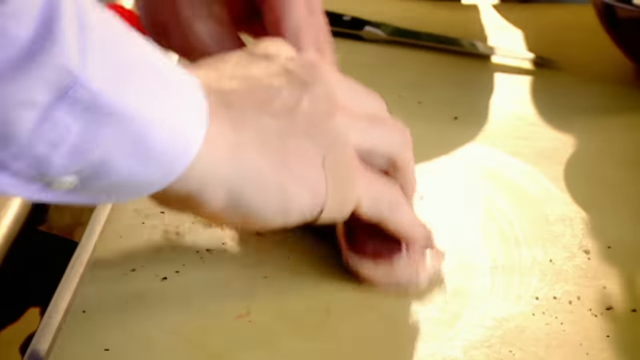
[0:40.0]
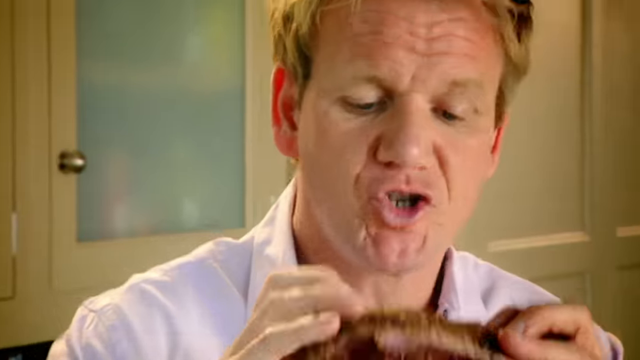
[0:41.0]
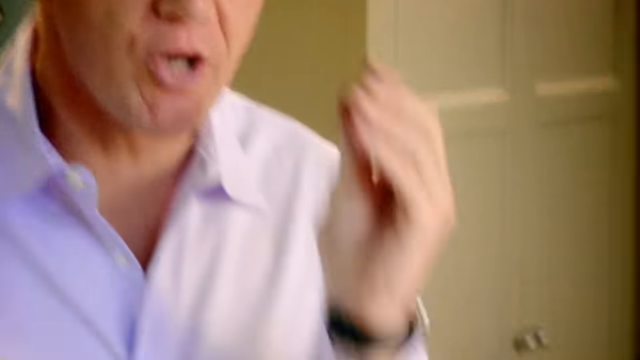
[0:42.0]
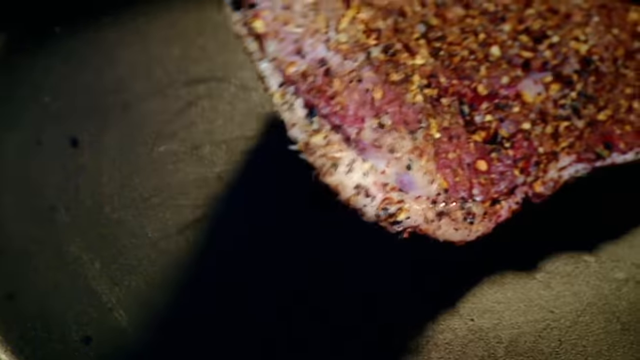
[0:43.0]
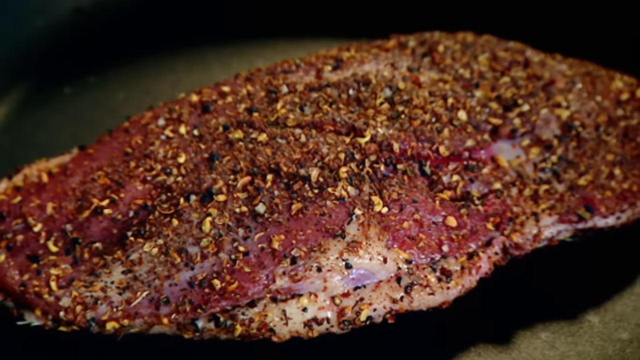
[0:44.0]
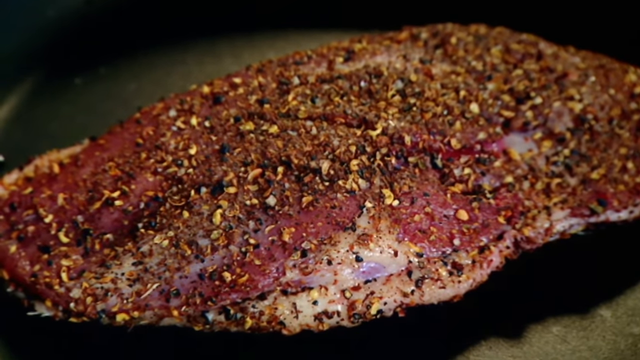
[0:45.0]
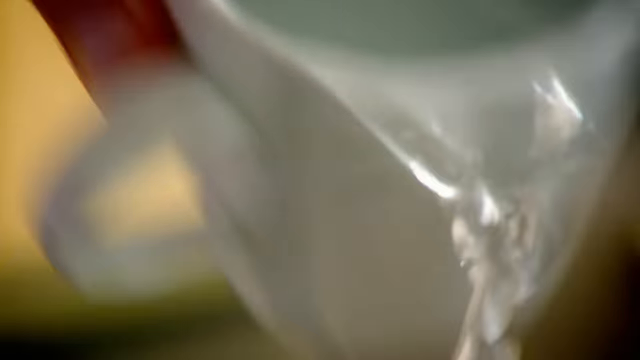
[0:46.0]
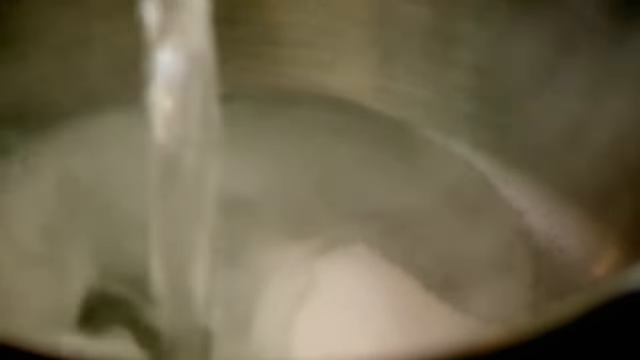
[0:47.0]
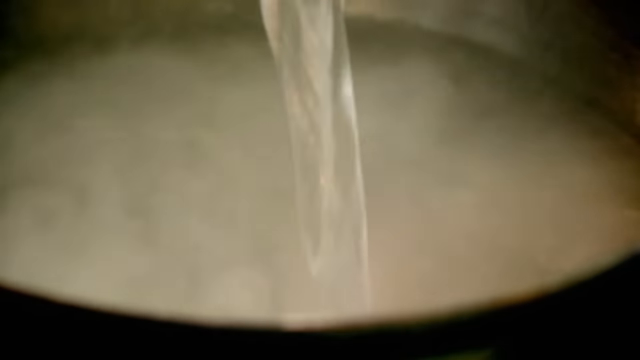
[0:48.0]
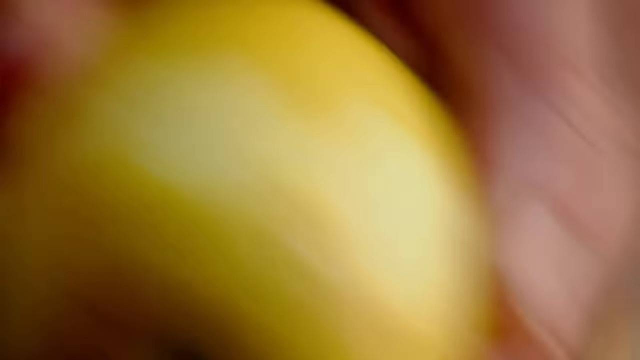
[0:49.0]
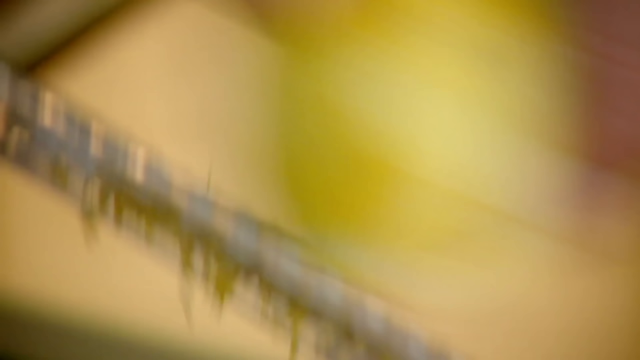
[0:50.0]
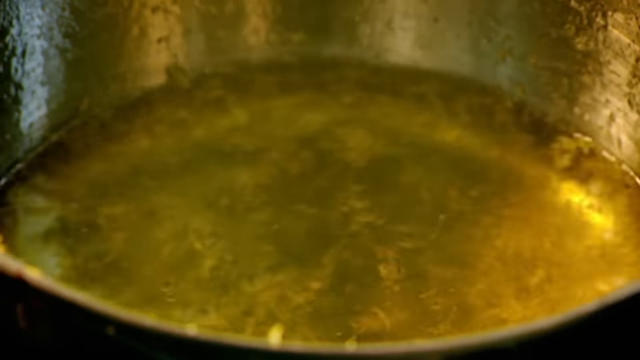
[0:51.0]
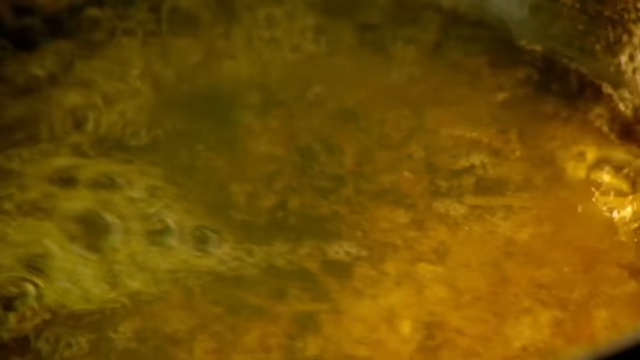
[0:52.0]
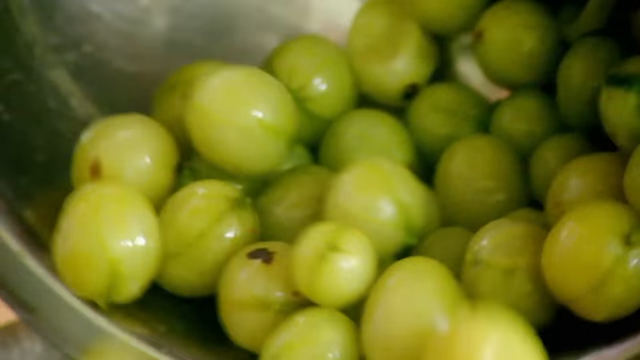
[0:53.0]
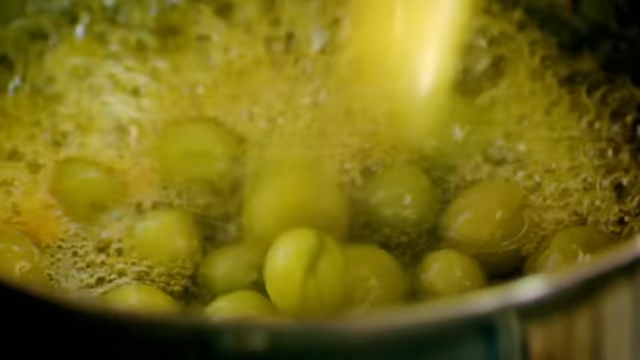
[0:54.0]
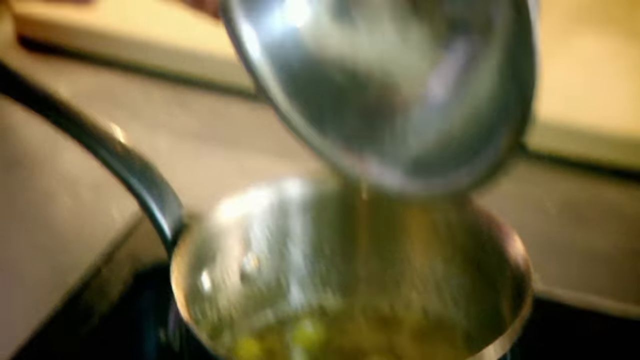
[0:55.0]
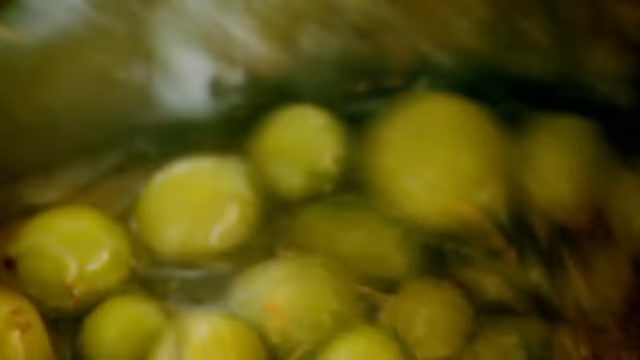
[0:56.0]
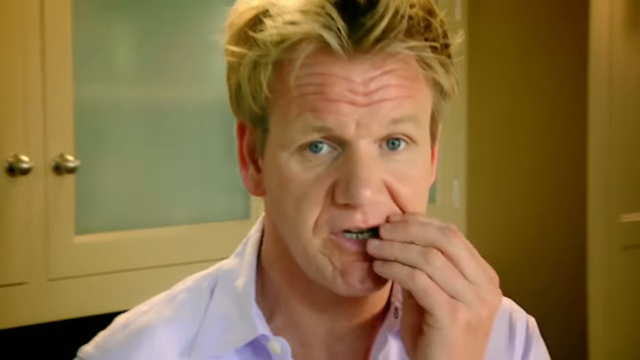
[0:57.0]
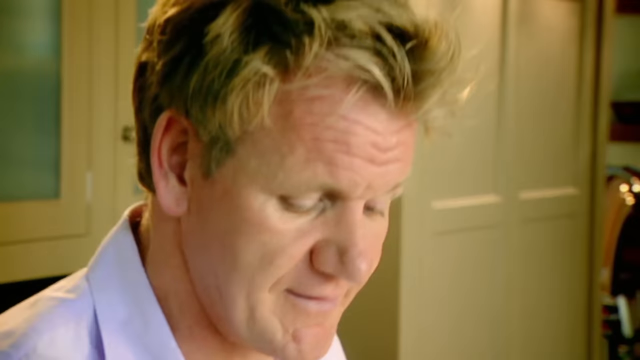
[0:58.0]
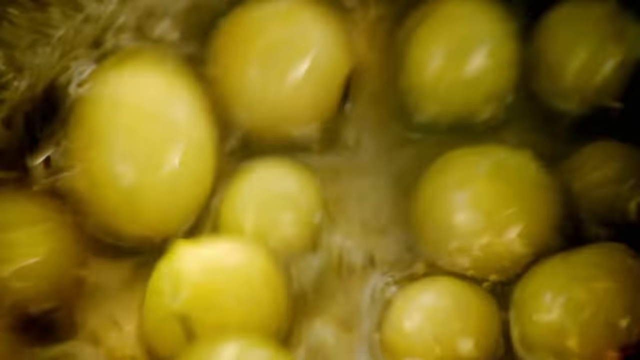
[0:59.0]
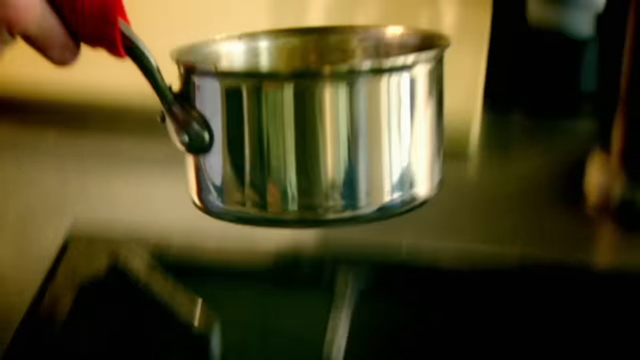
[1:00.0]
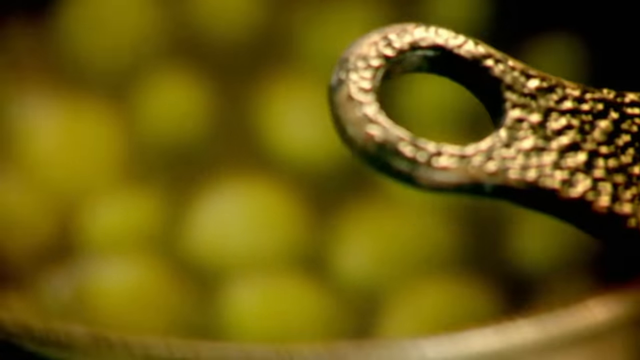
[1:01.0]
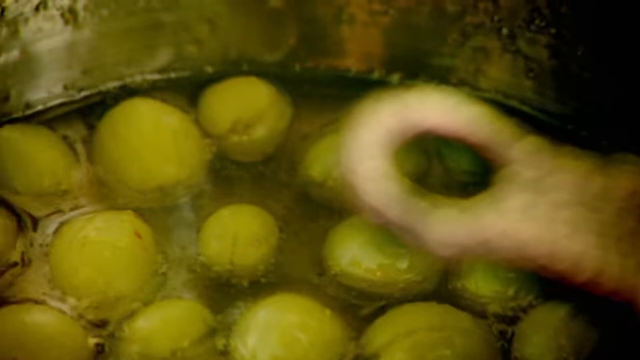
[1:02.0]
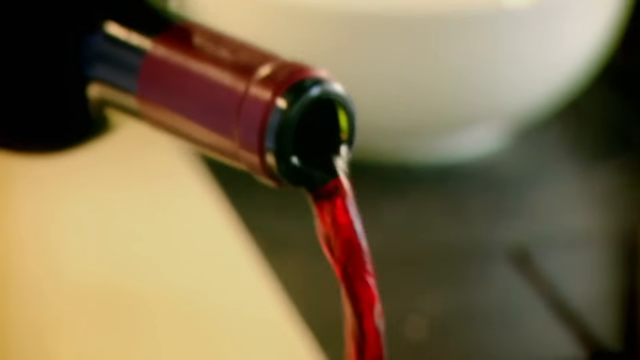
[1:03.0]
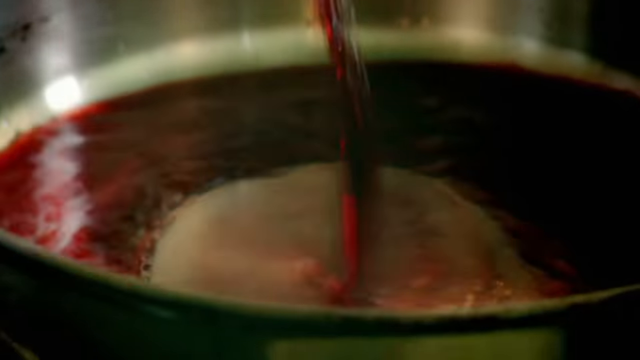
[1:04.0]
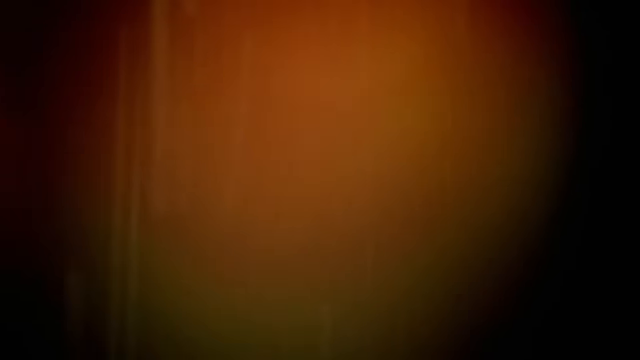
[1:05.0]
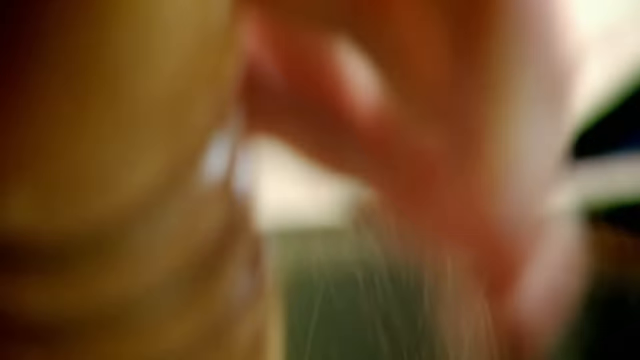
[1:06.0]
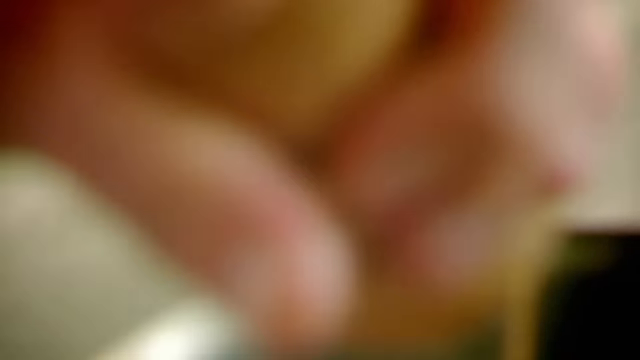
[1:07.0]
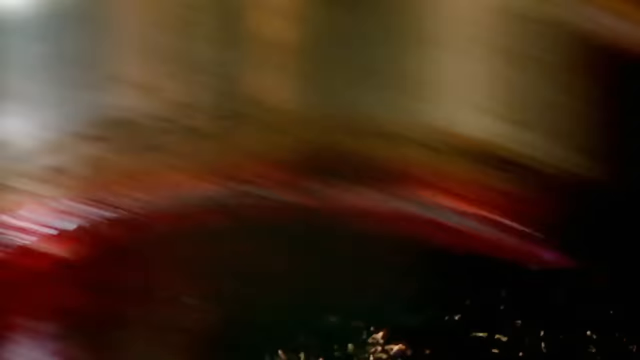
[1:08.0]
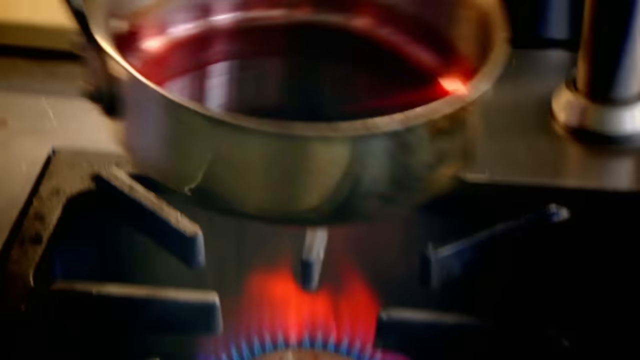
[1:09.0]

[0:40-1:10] The man wipes the table he is working on with the steak he has just seasoned. He takes the steak in both hands and brings it close to his face while talking, looking like he is admiring his work. He places the steak in an empty pan. On the side is a little pot containing what looks like white sugar; he pours water into it and grates lemon zest into the mixture. When the mixture starts boiling, he pours in a cup of golden green grapes. Into another pot he pours red wine, which splashes onto the sides of the pot. The environment he is working in is very clean and spotless.